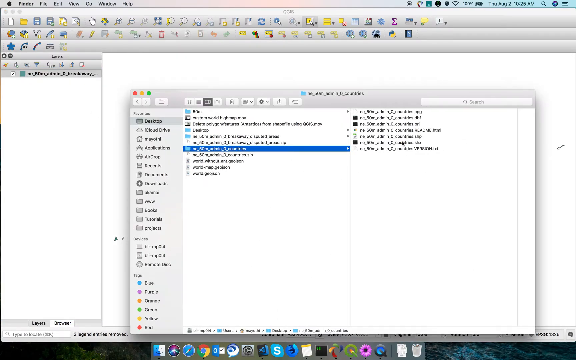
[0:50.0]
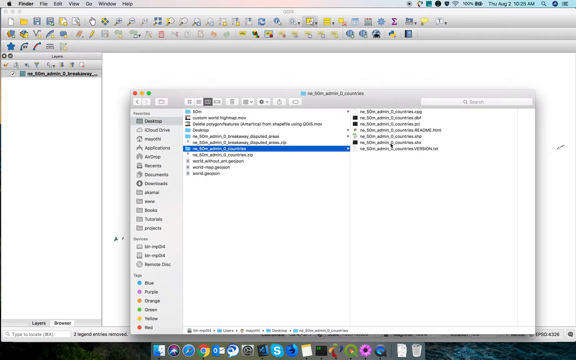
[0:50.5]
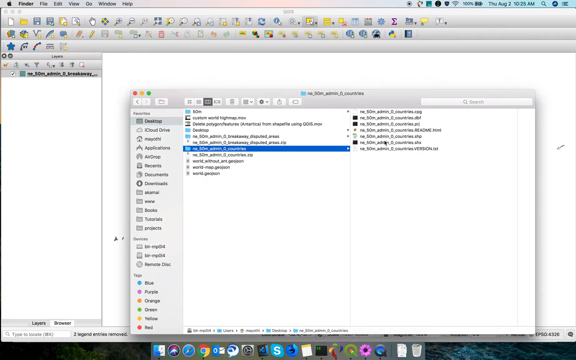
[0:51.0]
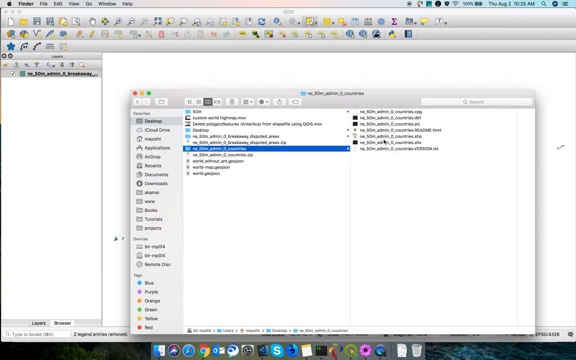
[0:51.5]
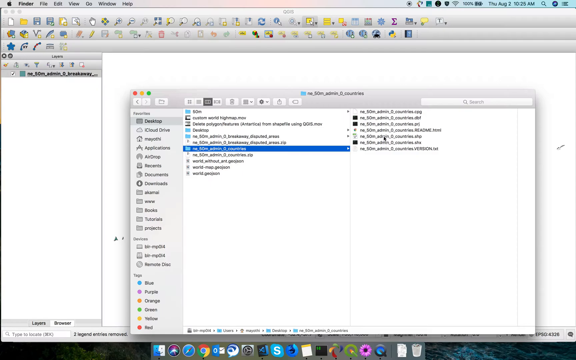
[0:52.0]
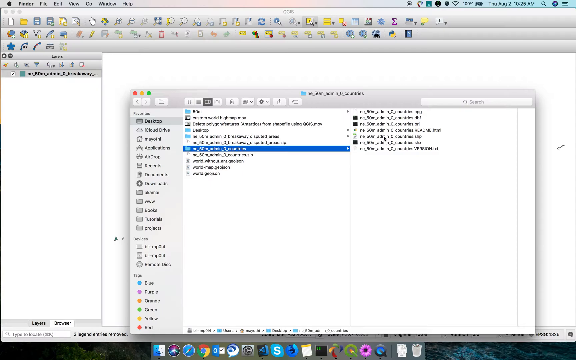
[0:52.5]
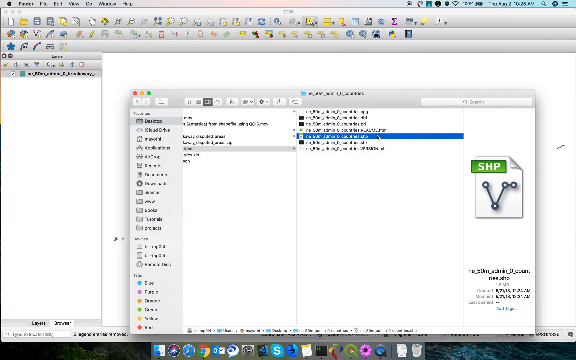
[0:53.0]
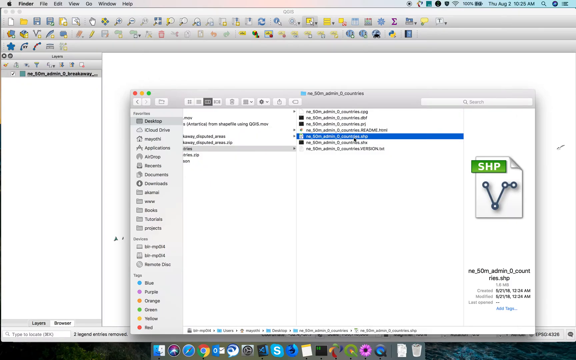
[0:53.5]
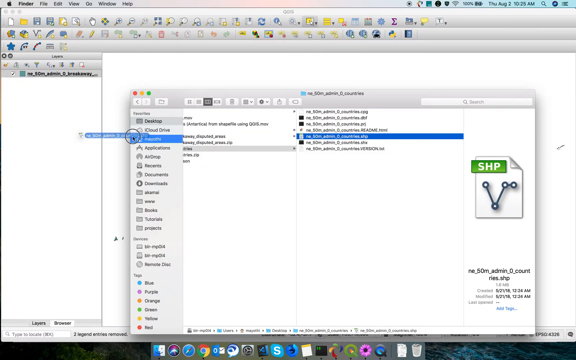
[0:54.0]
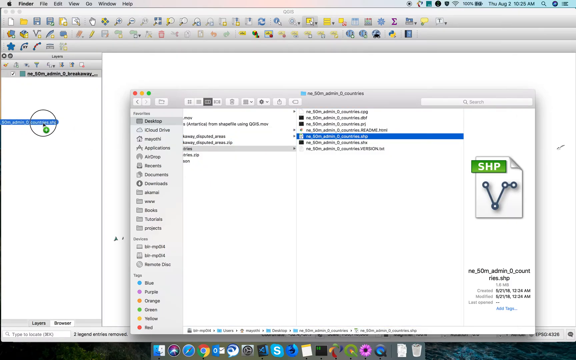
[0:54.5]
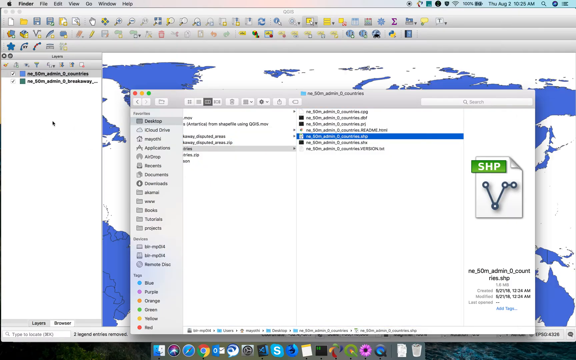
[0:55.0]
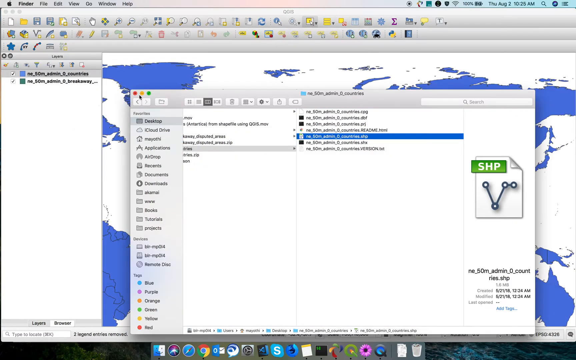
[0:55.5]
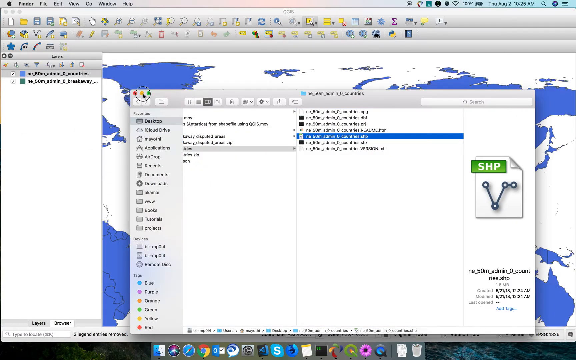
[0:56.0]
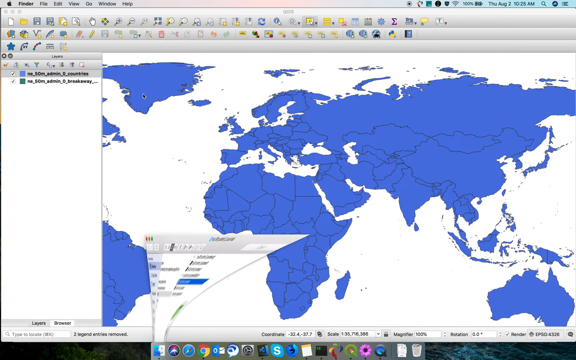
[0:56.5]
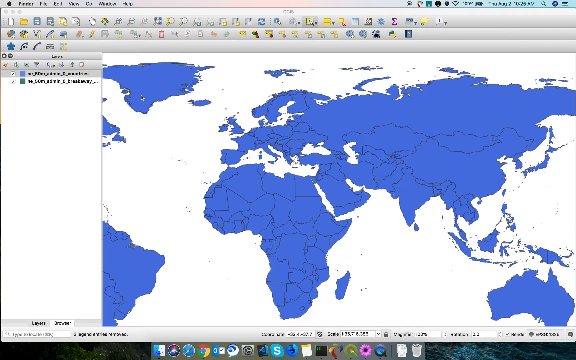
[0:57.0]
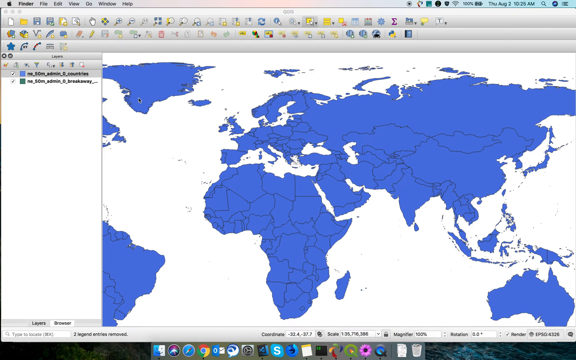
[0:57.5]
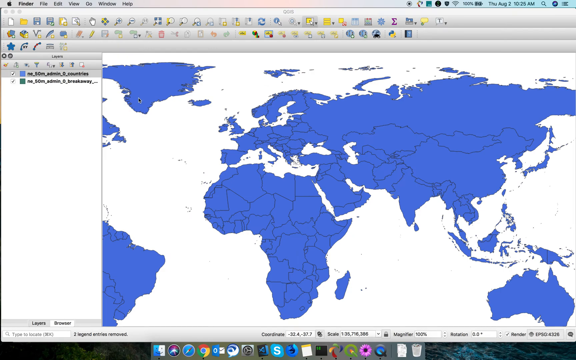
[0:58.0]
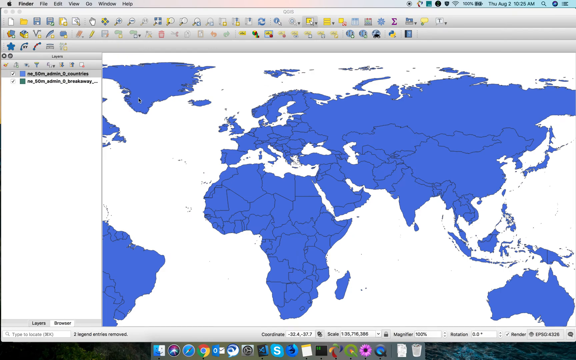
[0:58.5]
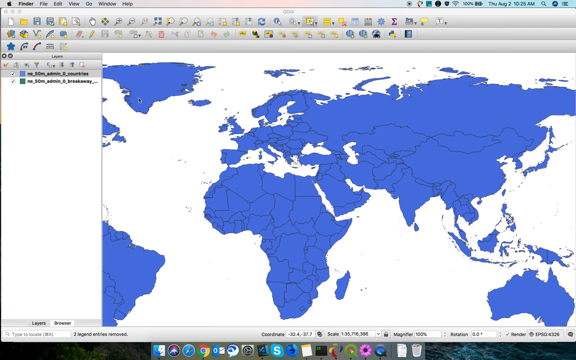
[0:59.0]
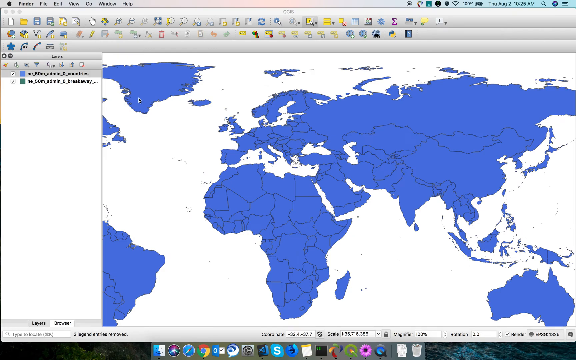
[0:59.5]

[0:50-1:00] The saving-files desktop is still shown, including places where files can be dragged to. A picture of the world then appears, with many countries highlighted in blue. More icons from the Finder and Play screen of the app are shown, along with the date and time and other Mac computer features.